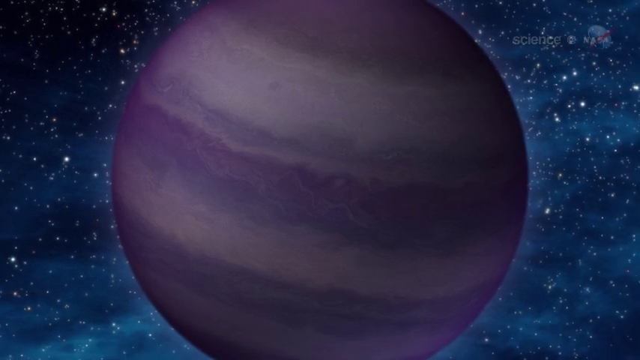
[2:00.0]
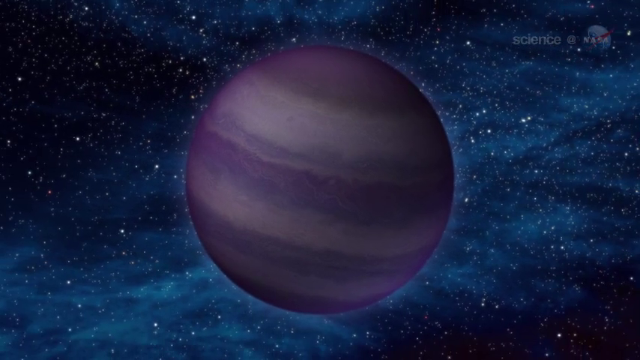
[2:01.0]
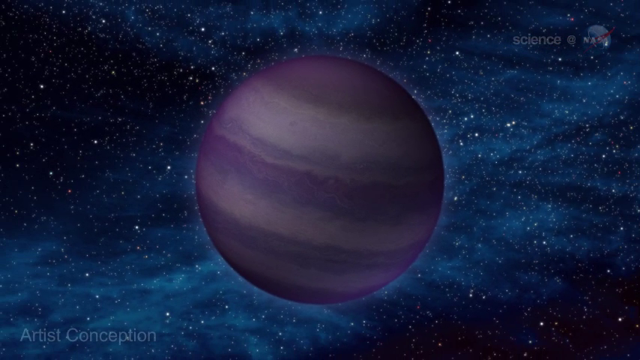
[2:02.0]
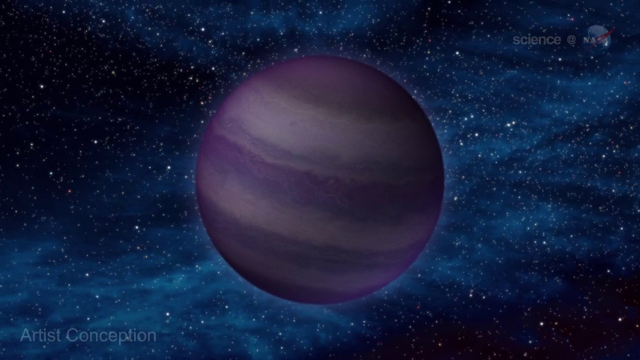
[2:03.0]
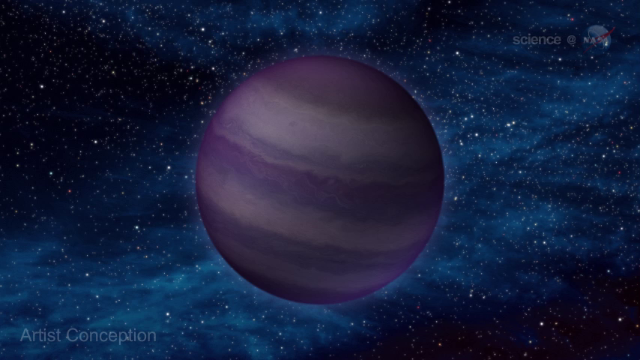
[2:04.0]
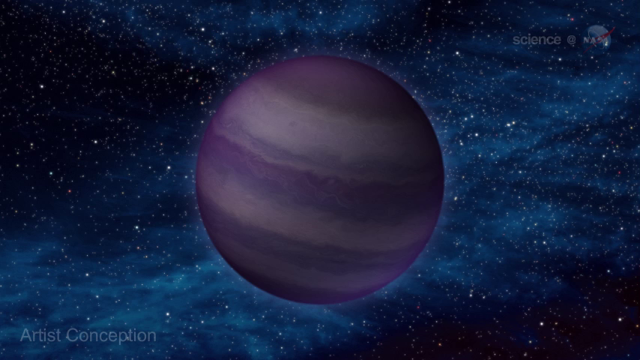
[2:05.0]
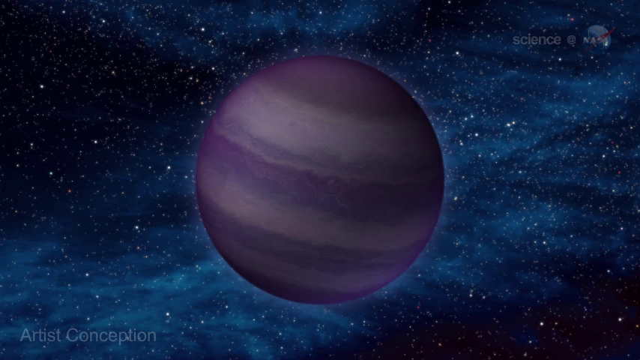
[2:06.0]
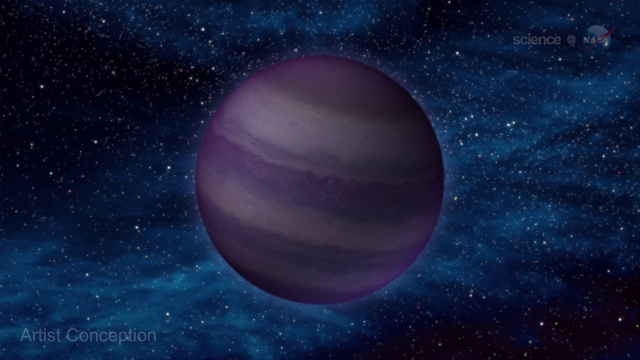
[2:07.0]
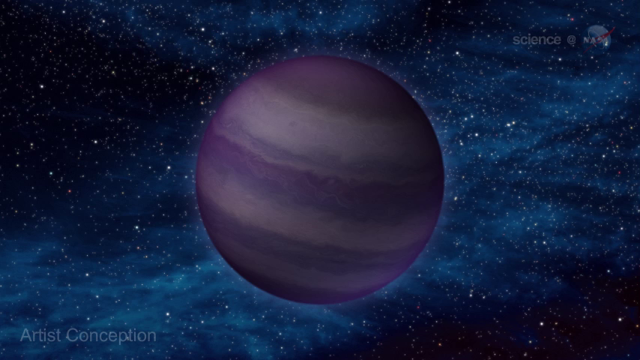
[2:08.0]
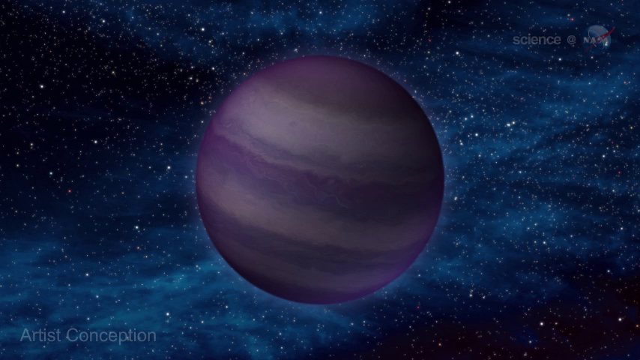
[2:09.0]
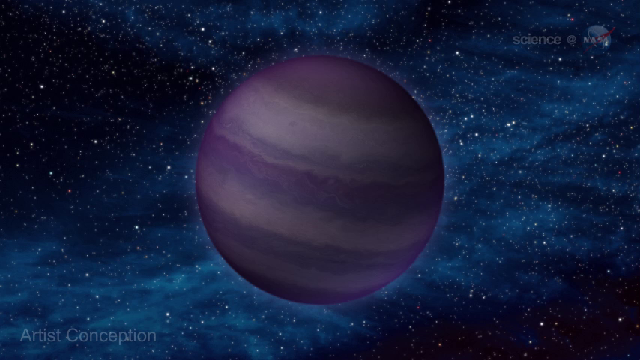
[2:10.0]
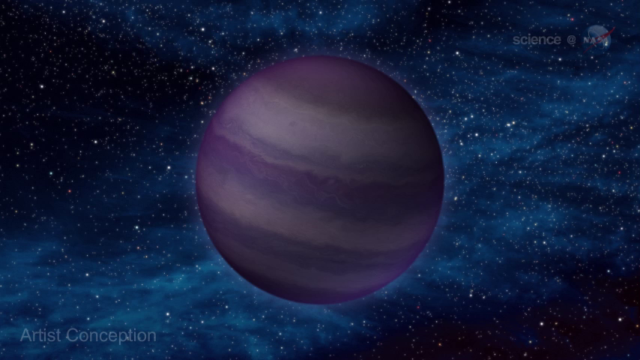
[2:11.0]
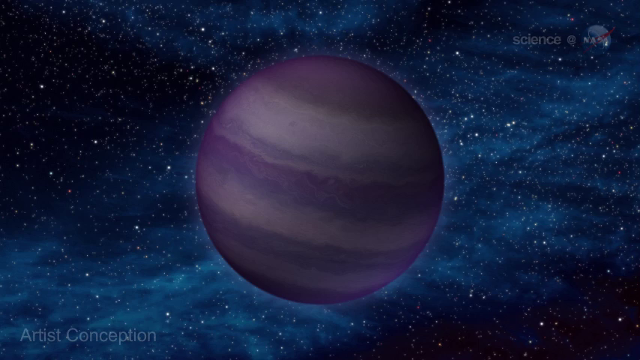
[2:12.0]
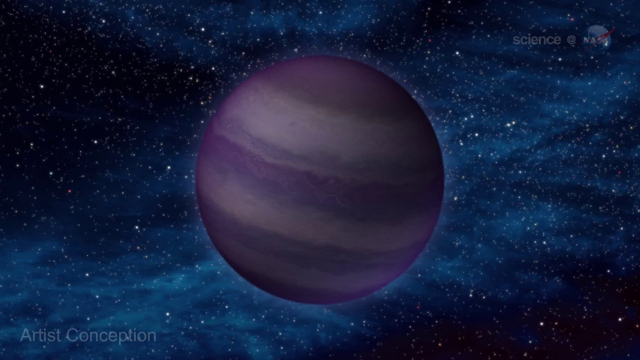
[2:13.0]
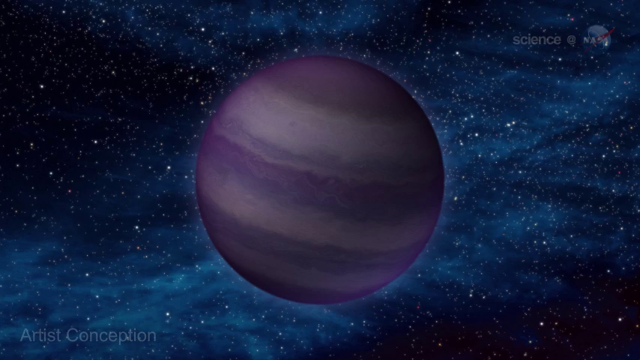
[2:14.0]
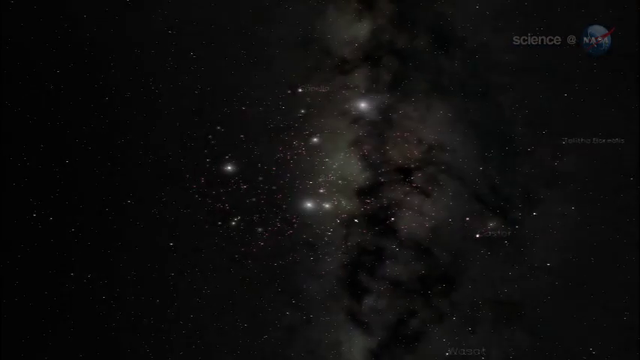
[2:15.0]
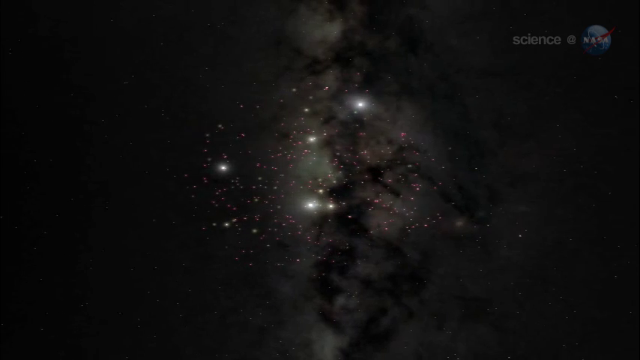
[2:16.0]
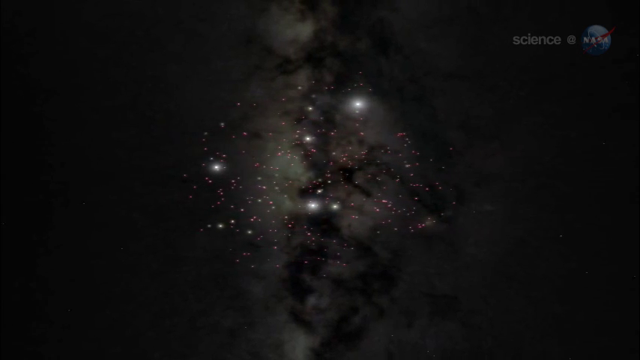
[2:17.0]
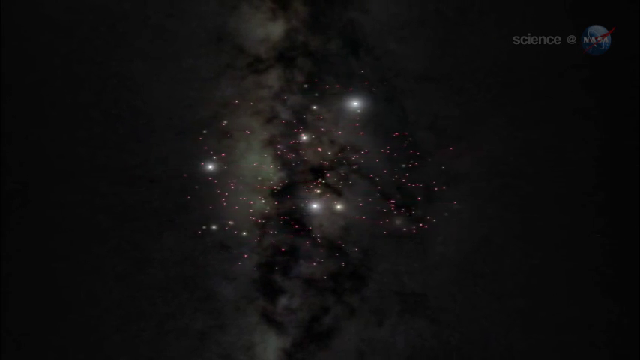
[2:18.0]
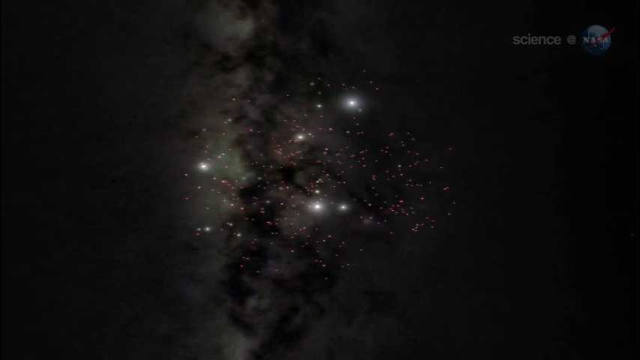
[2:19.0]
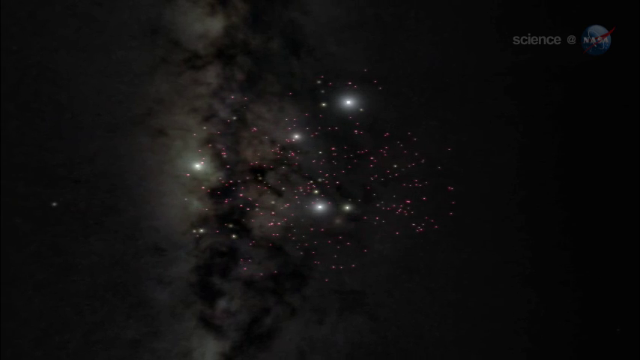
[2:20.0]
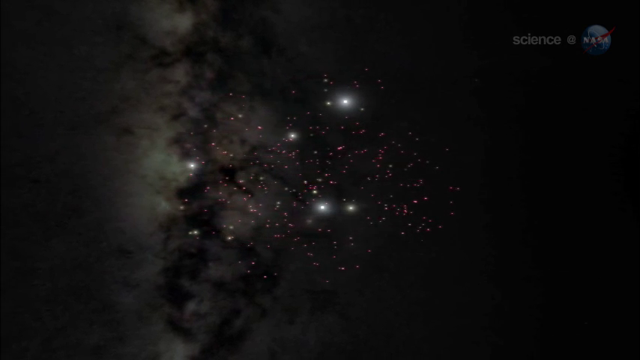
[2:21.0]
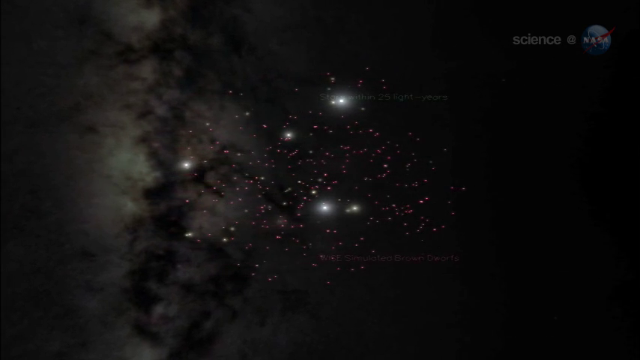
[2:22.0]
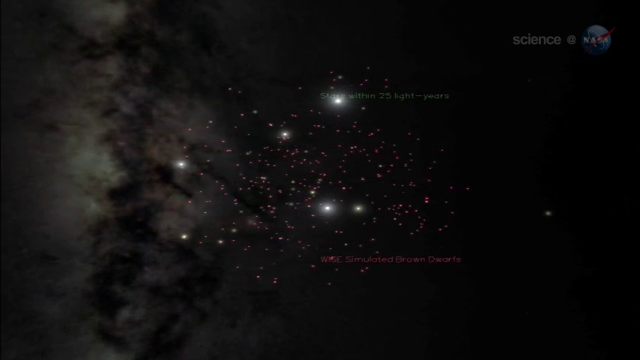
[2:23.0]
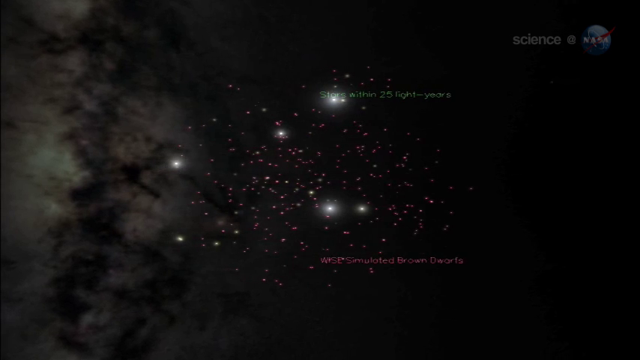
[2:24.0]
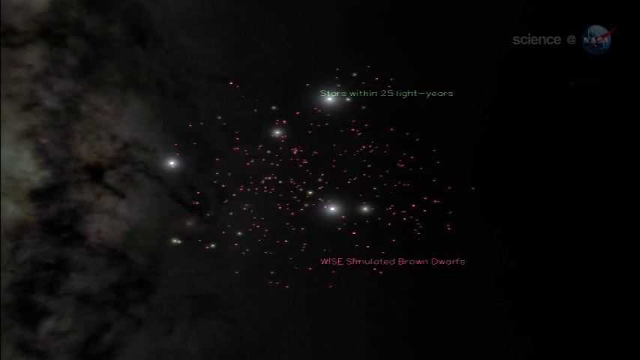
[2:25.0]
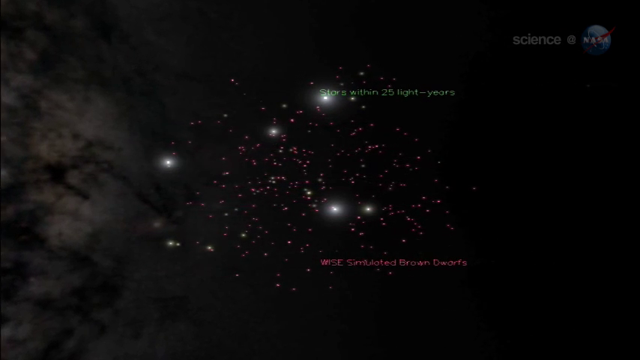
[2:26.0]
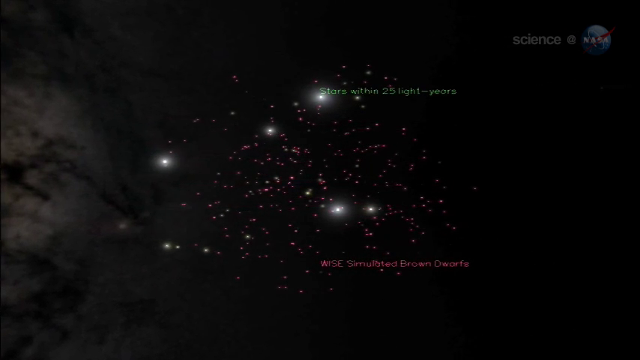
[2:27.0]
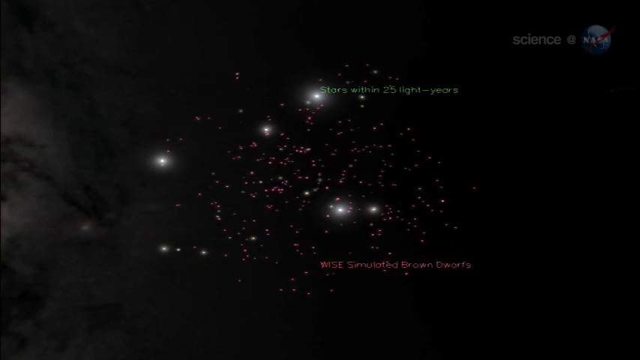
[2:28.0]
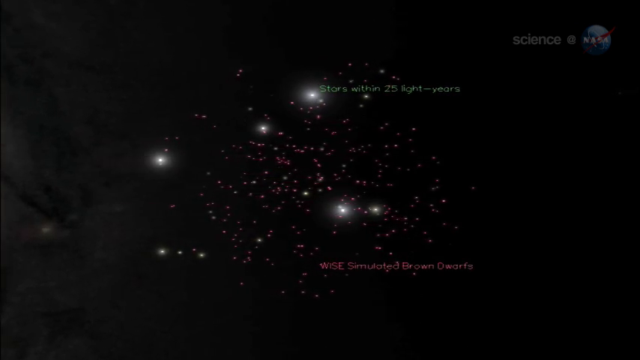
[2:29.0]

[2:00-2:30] The camera zooms out on the planet, which is brown and gray, with blue lines and blue clouds around it and many different stars on a black background. The camera zooms out to show the entire planet, surrounded by massive blue clouds. The camera remains on the planet for some time, and there seems to be some type of light emitting from it. It then cuts to another shot of a galaxy with a dark brown cloud rotating with all the stars from left to right; some of the stars are very bright and some are not, and some are massive. Words appear reading "stars within 25 light years" and "Ys simulated brown dwarfs", all on a dark black background.